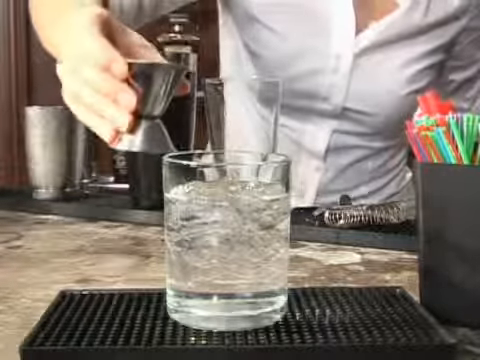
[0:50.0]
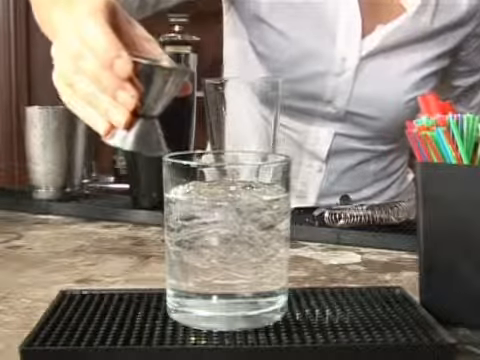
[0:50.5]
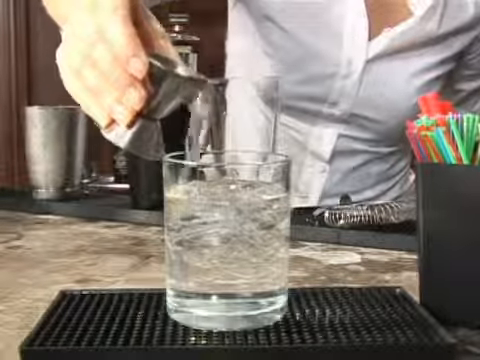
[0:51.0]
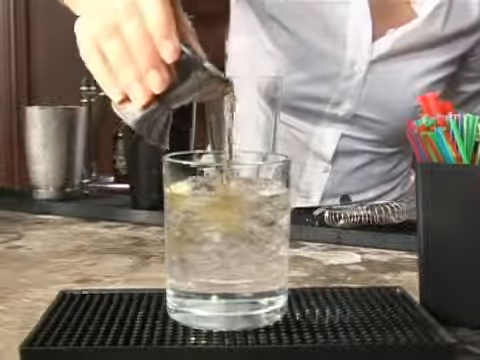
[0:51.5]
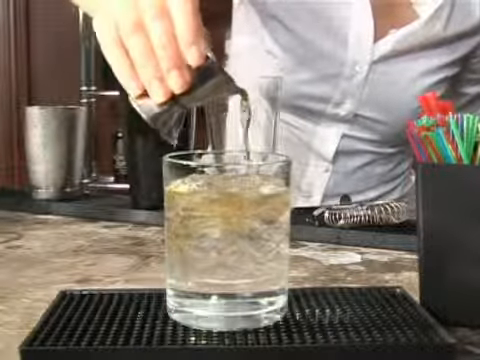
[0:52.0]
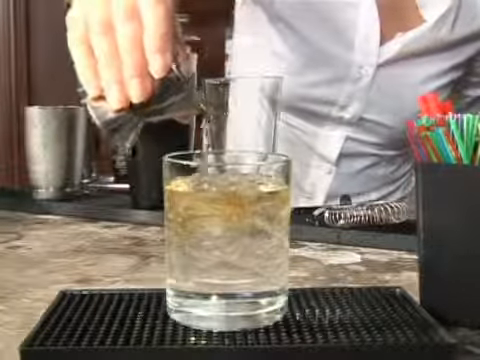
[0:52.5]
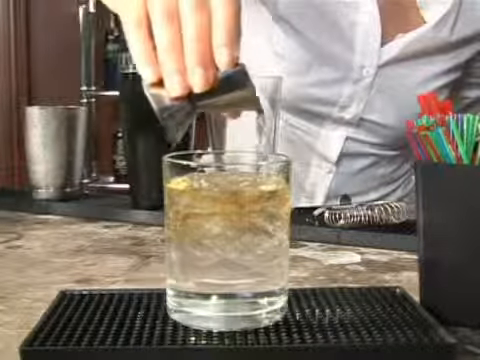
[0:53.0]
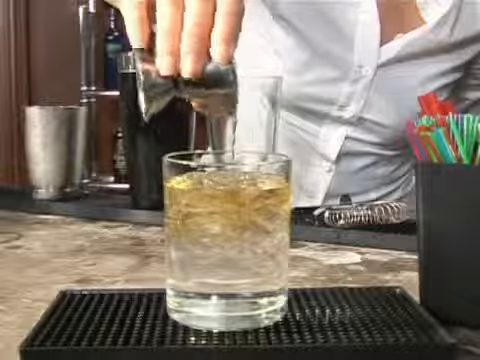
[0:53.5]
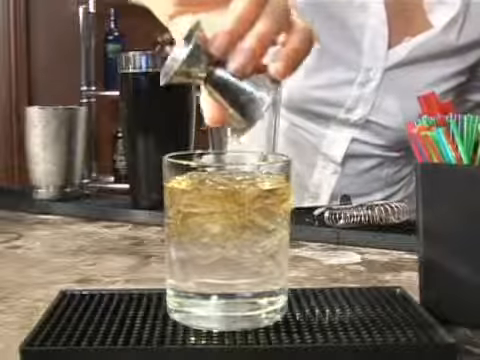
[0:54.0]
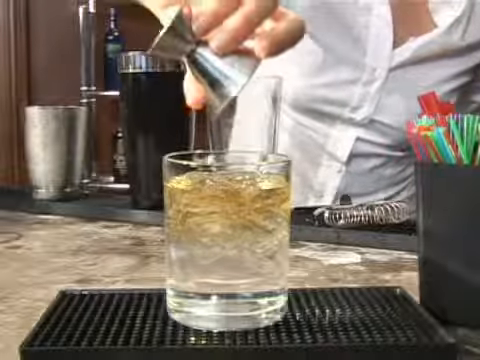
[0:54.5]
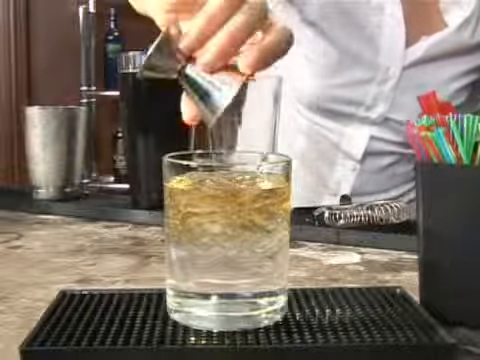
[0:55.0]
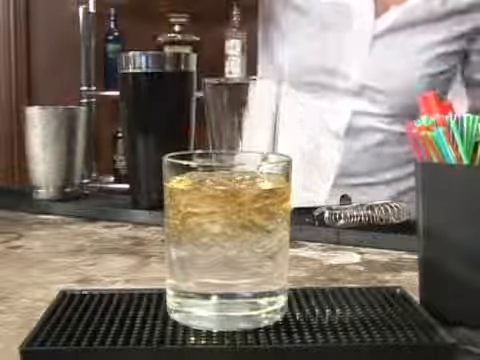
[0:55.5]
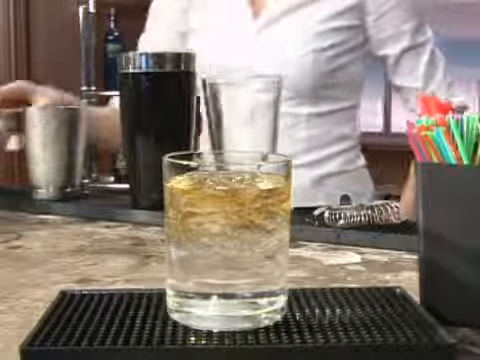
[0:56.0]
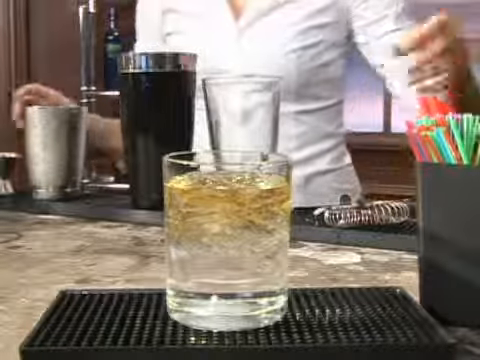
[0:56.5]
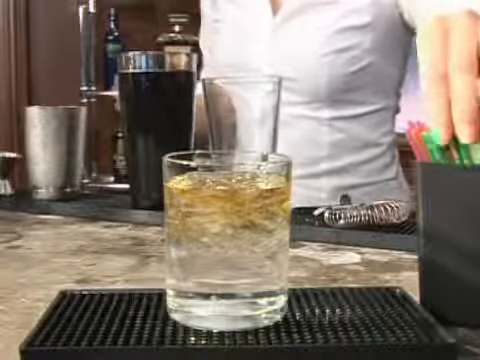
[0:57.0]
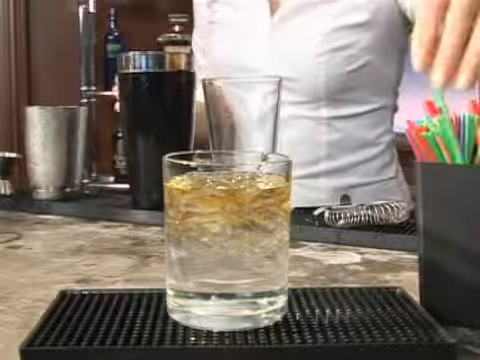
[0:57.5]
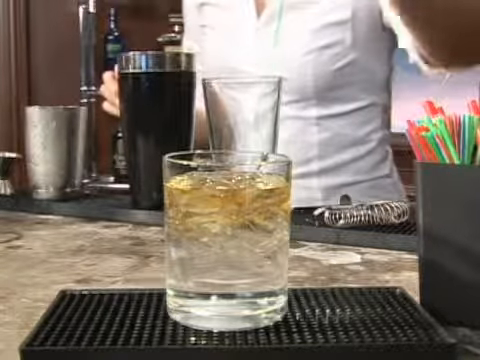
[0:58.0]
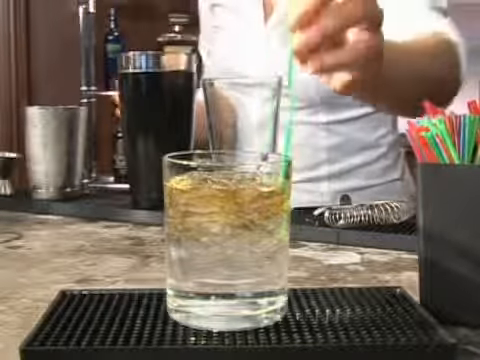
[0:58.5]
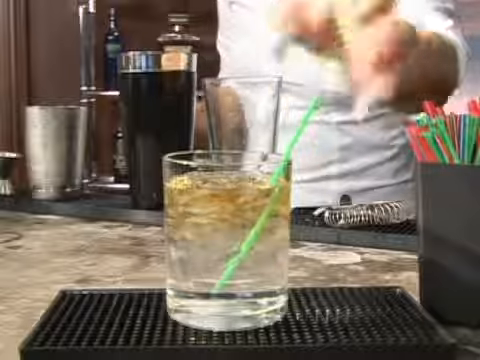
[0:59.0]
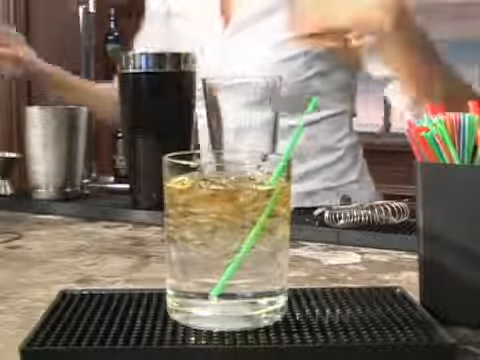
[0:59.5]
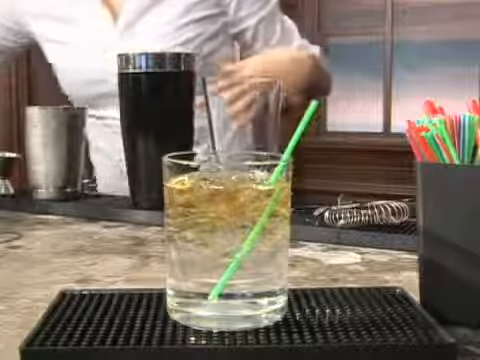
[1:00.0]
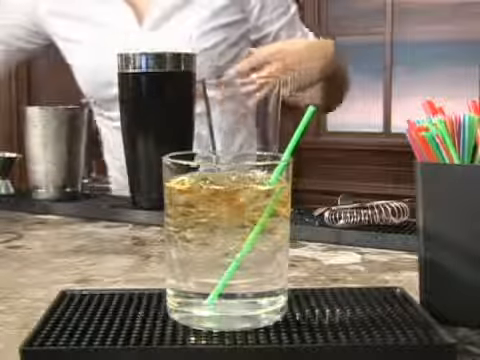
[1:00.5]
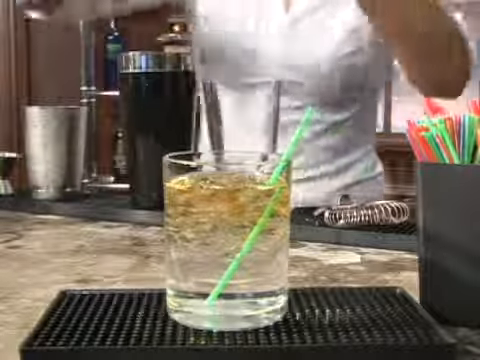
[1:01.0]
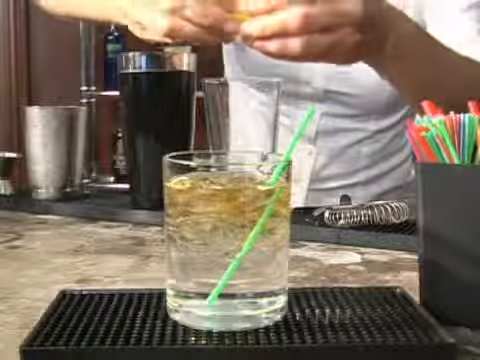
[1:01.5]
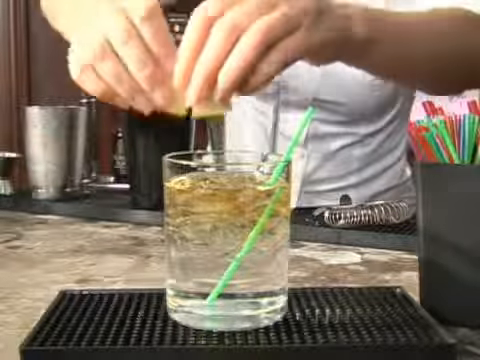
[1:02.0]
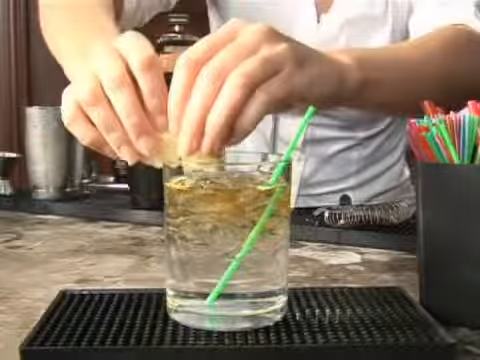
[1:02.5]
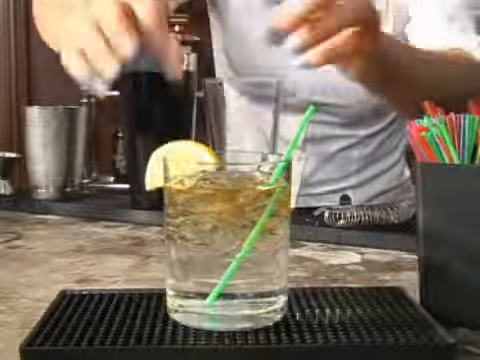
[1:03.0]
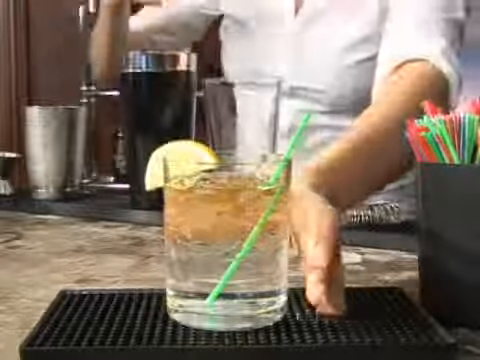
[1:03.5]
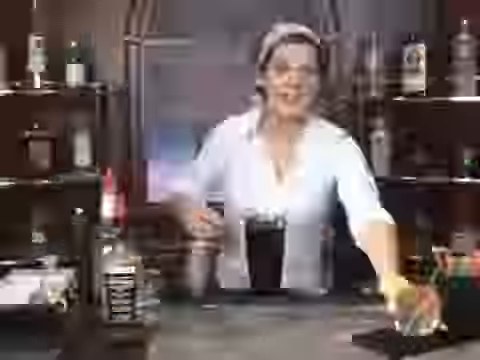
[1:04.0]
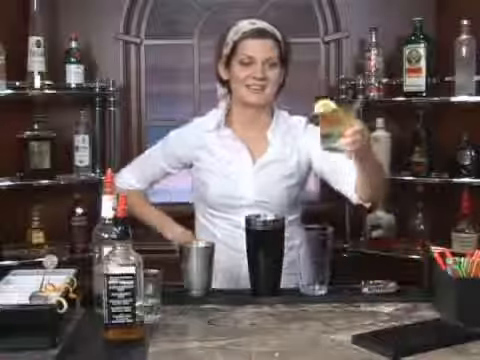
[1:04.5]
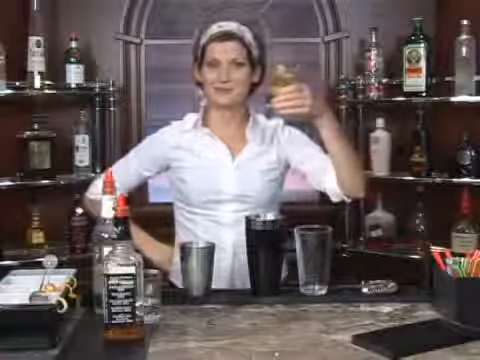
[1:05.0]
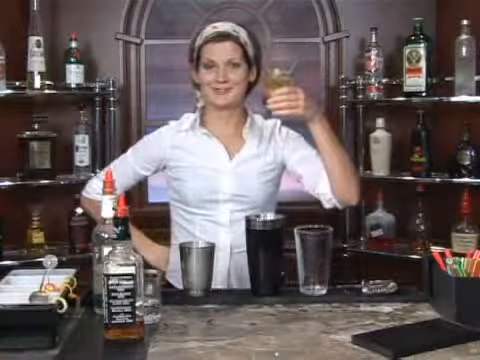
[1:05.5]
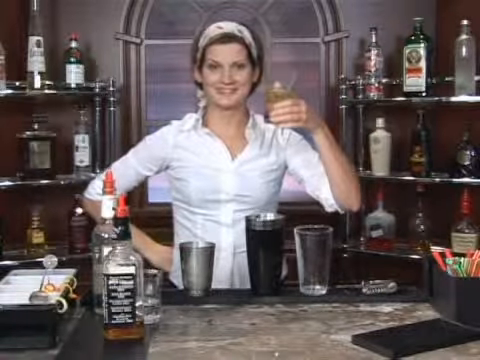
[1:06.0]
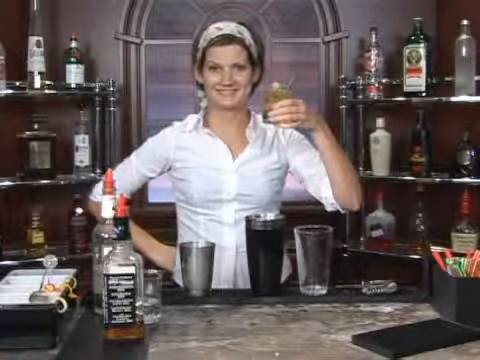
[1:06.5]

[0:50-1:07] The woman adds Jack Daniel to the drink, takes a straw and puts it inside the glass. She decorates the glass with a lemon slice. She seems to be the one who is going to drink it, or she may just be demonstrating it. She poses with the drink, showing it to the camera. The glass is filled with the beverage, some ice, some soda and some Jack Daniels, with a straw and a lemon slice decorating it.